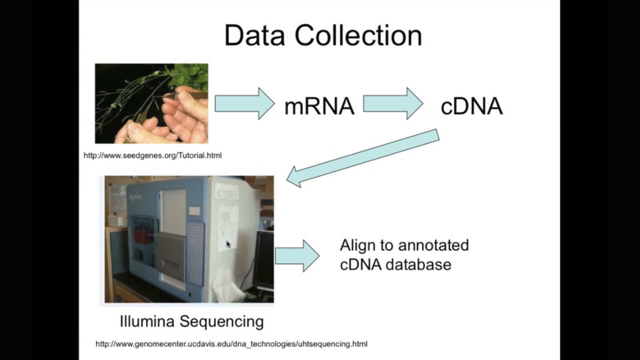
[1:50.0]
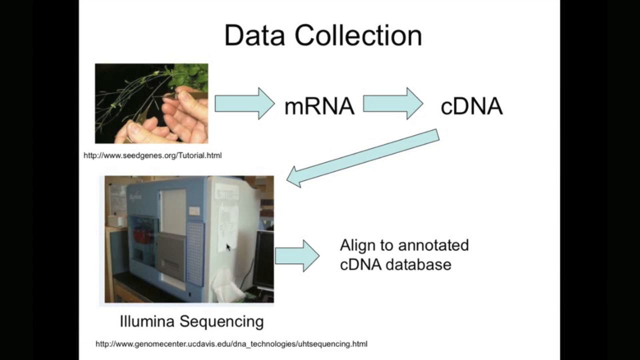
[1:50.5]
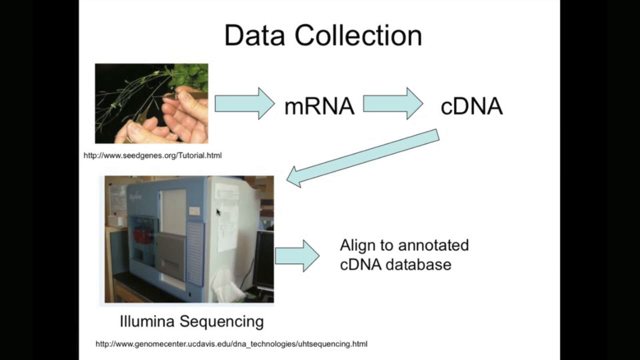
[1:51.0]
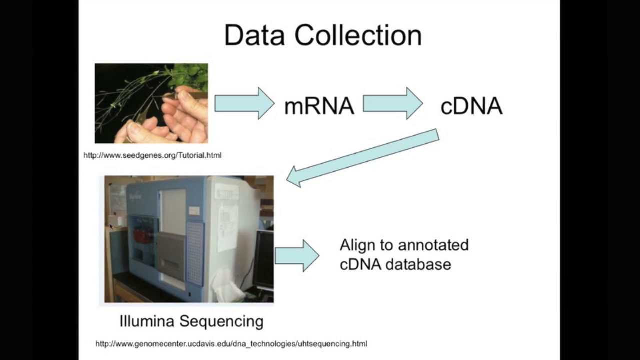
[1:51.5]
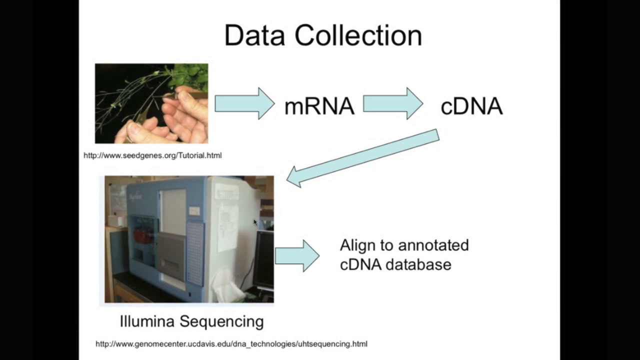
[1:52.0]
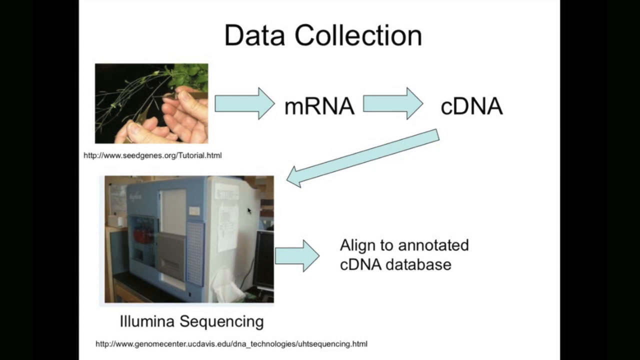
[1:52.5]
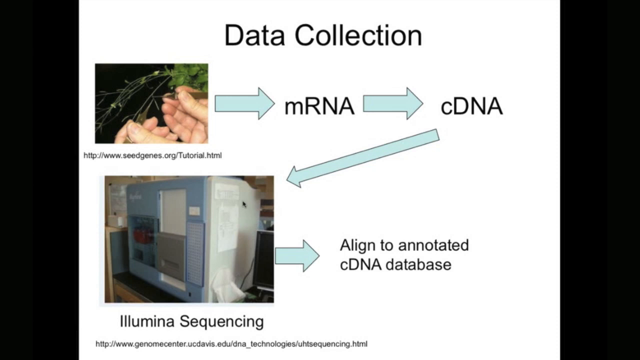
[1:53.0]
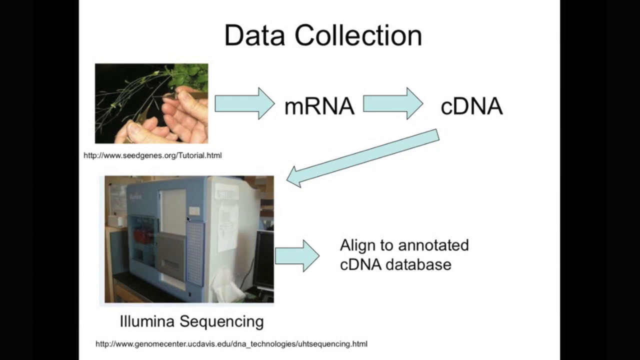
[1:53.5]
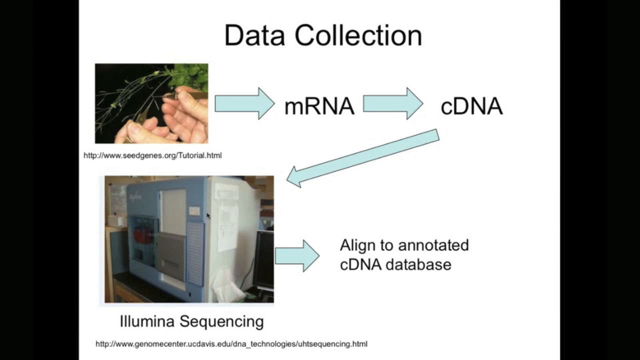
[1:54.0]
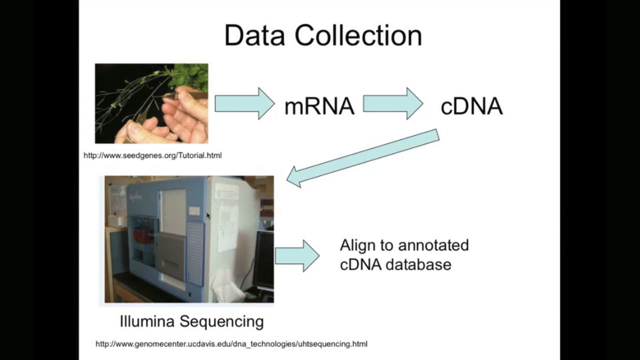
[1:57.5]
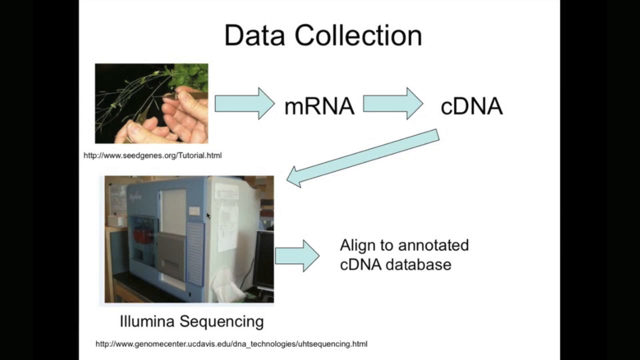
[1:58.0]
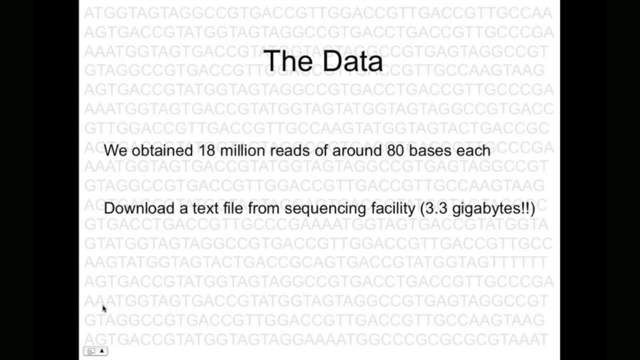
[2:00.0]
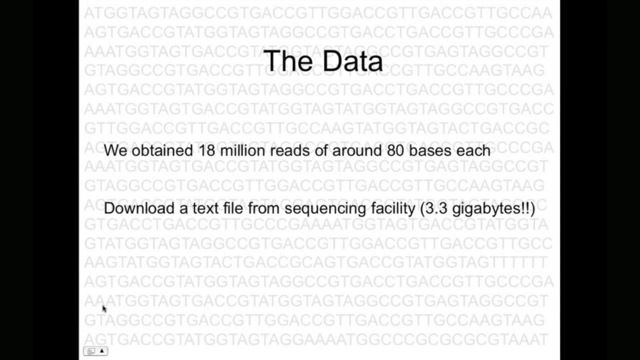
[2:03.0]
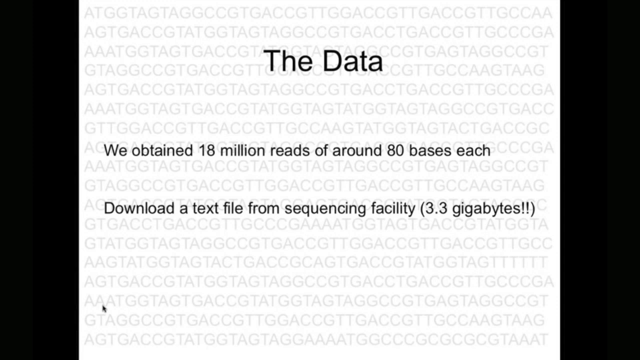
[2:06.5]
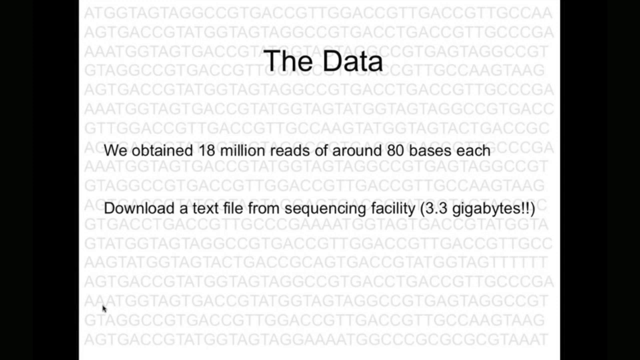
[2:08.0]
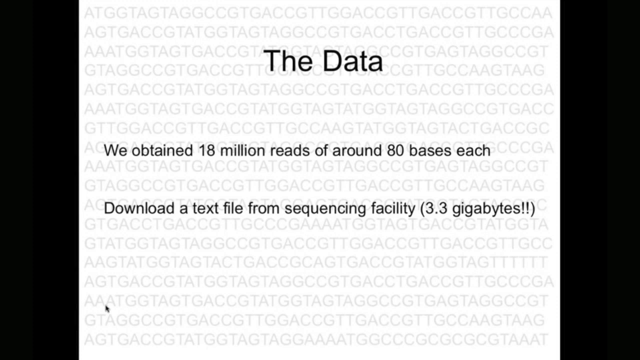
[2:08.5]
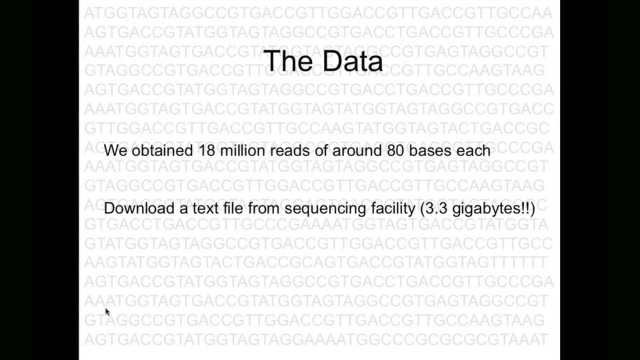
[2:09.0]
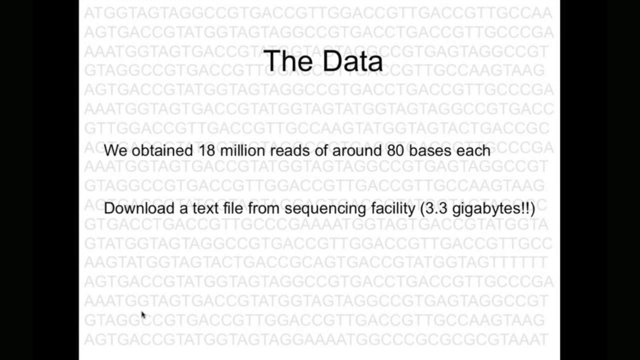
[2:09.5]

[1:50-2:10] The content refers to many annotated cDNAs, a downloaded text file totaling gigabytes, and a large database of genome sequence data.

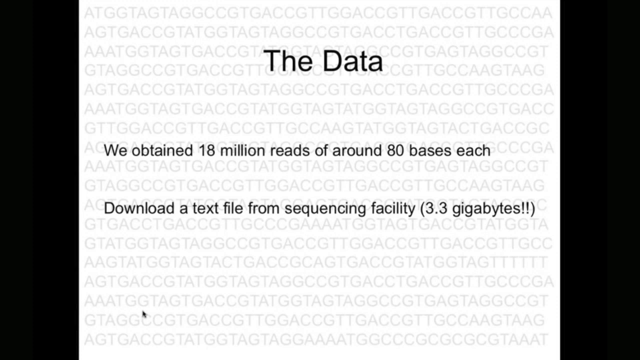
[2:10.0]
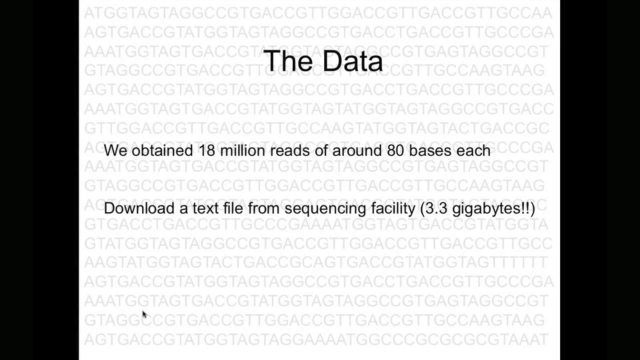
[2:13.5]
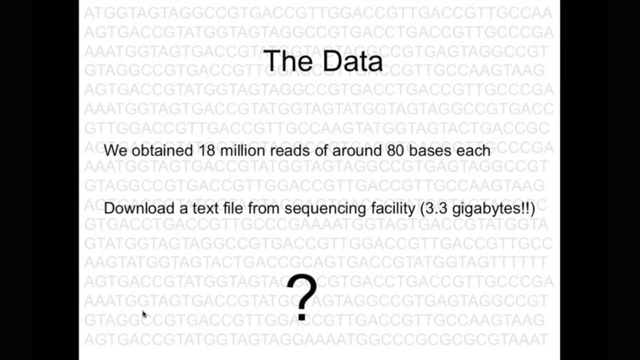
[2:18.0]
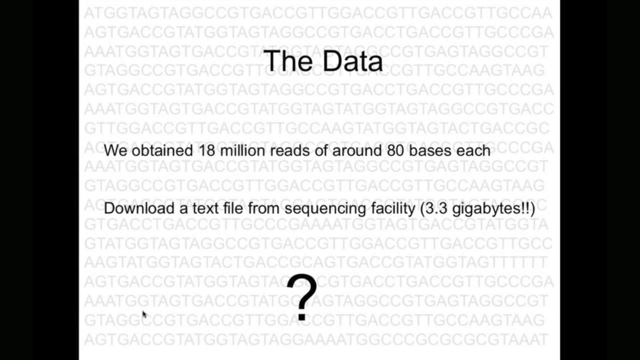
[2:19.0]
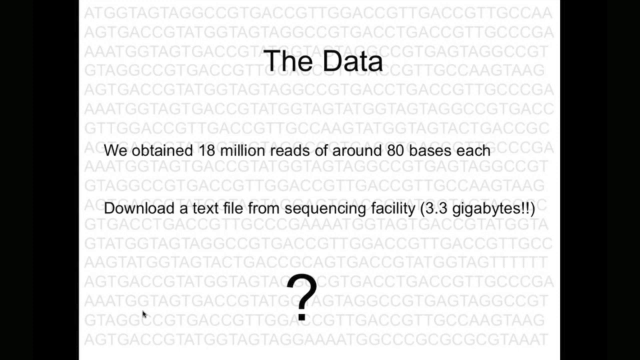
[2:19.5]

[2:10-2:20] The content concerns sequences being arranged in different ways over various periods of time, with DNA in the background.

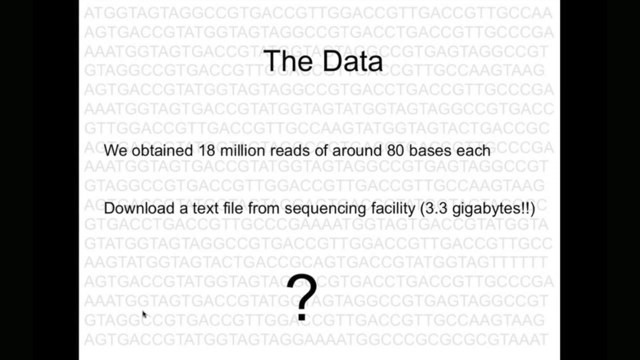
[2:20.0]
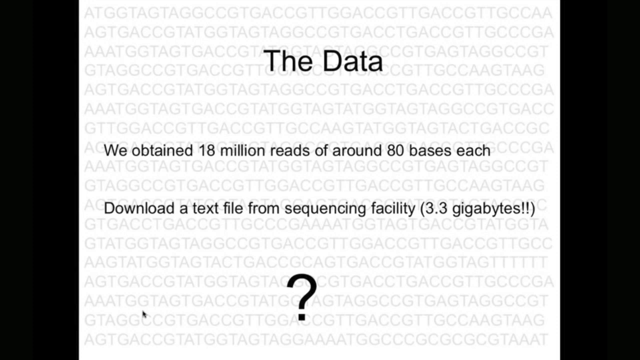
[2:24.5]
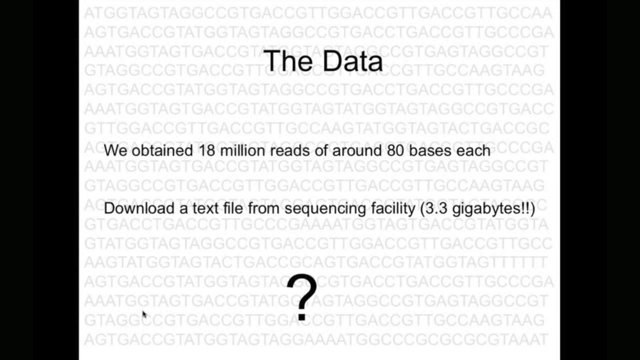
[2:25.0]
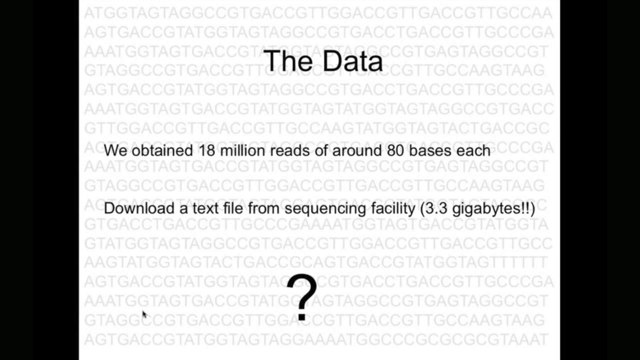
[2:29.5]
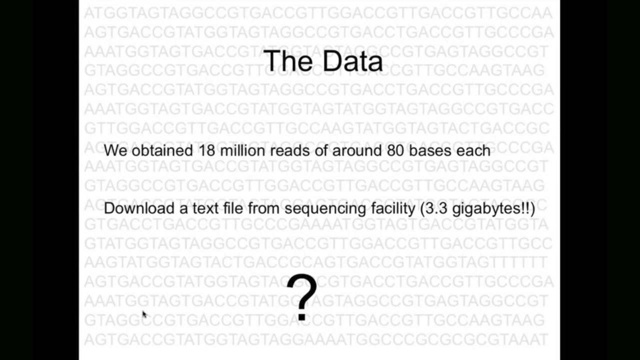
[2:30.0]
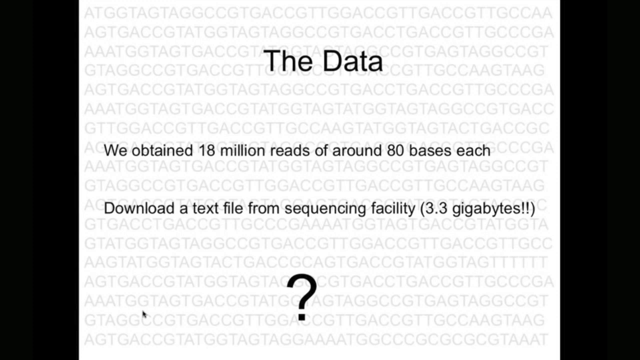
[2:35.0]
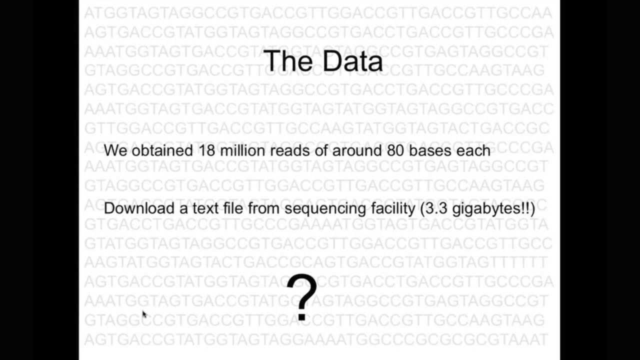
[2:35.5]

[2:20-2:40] The content refers to sequence data obtained in 2008, downloadable as text totaling 3.3 gigabytes, with data pieces put together into various genomic sequences.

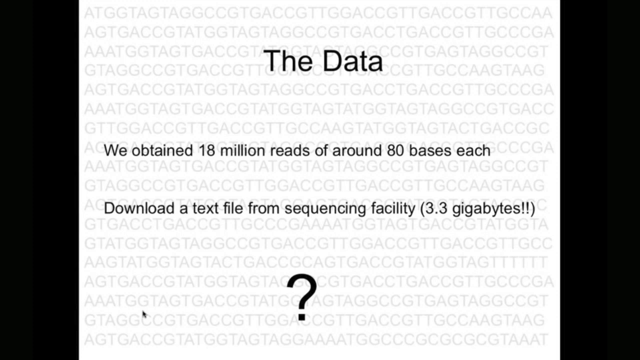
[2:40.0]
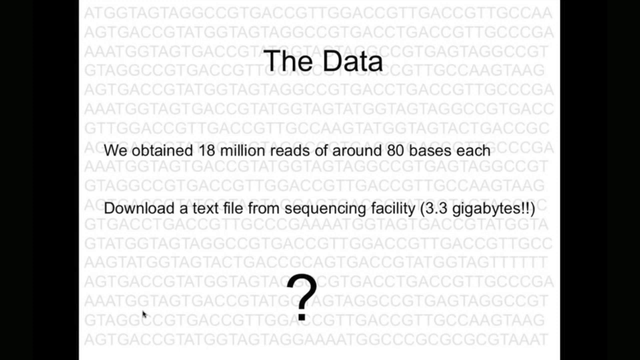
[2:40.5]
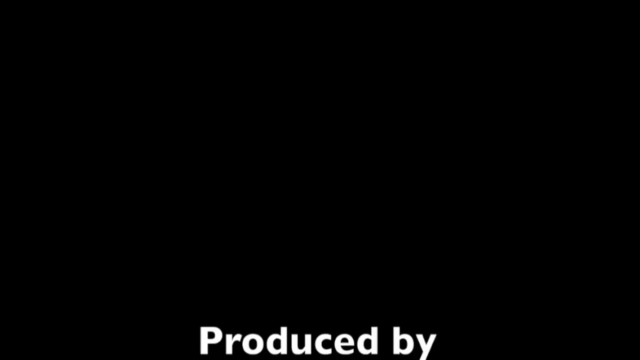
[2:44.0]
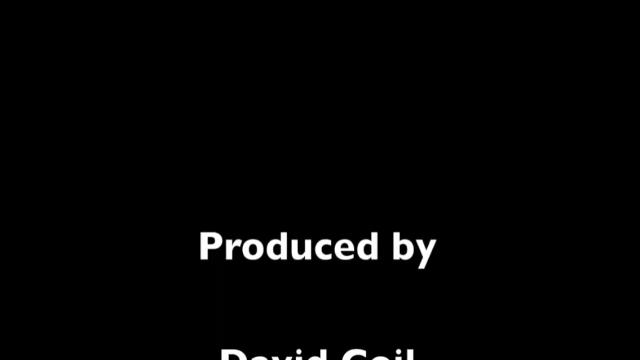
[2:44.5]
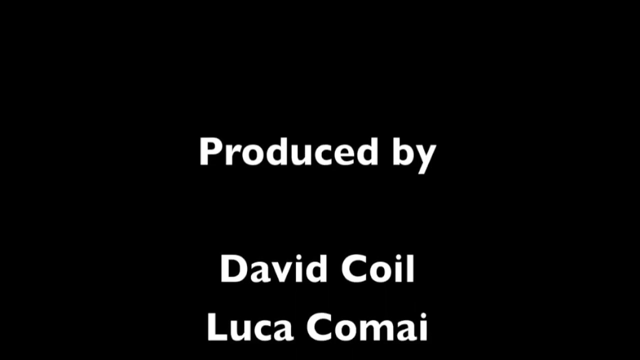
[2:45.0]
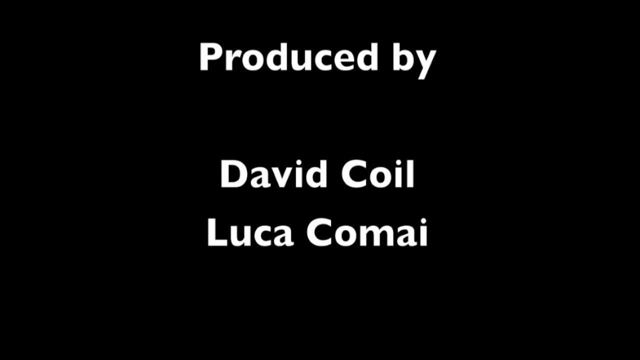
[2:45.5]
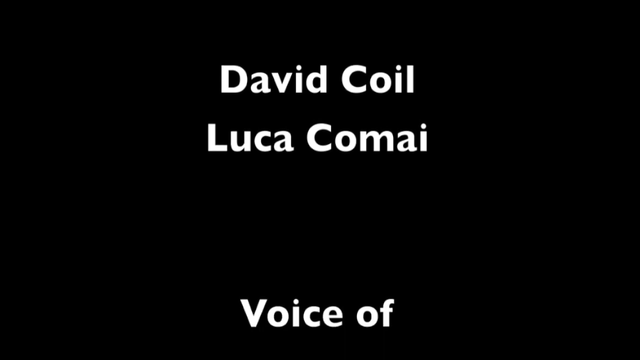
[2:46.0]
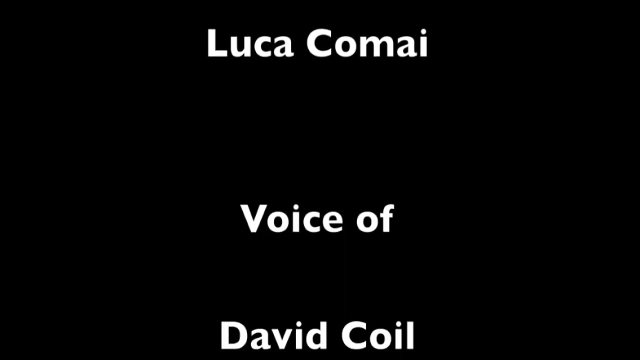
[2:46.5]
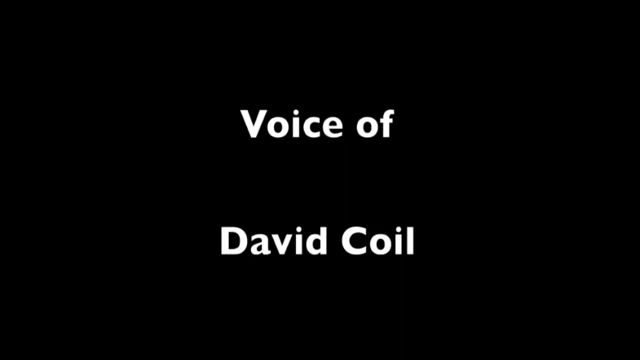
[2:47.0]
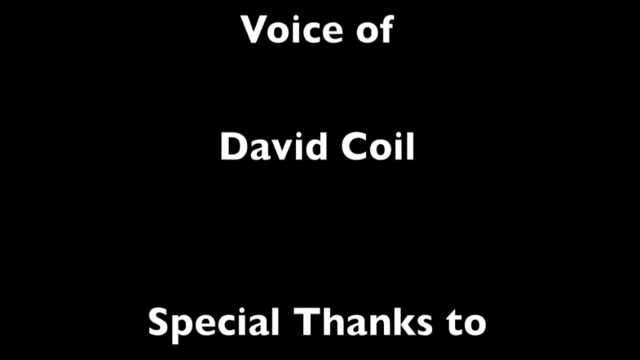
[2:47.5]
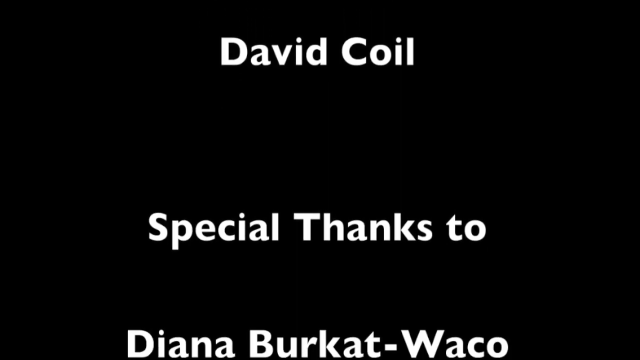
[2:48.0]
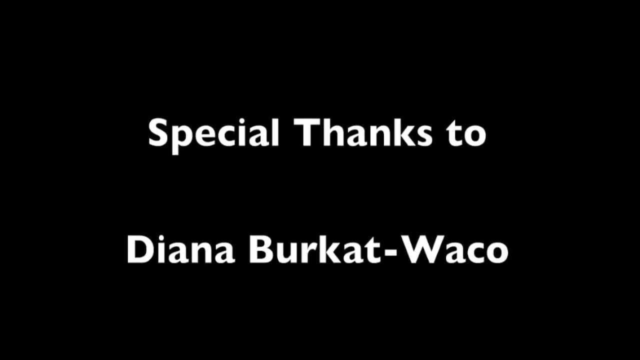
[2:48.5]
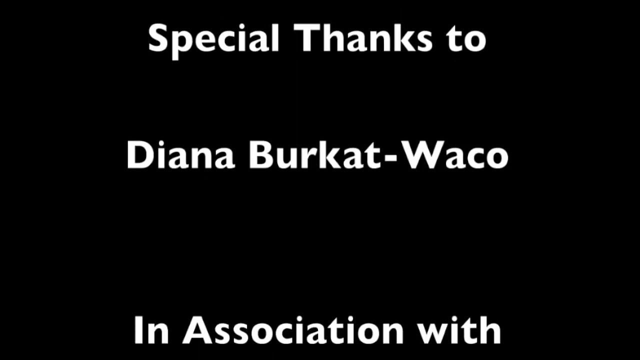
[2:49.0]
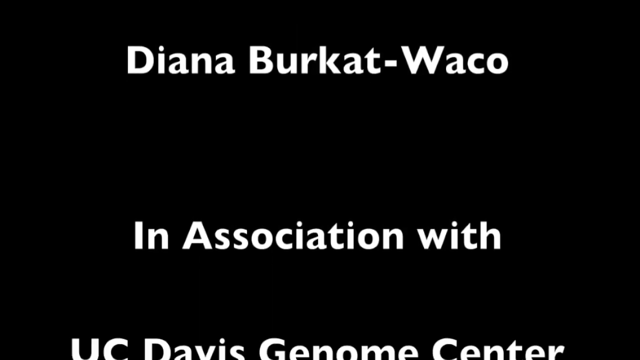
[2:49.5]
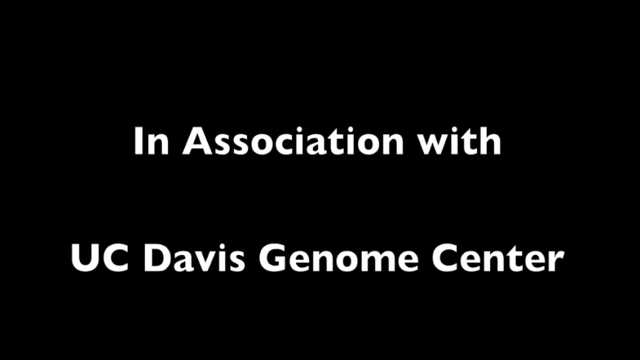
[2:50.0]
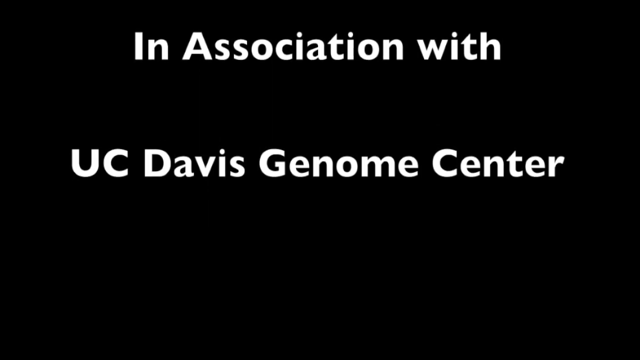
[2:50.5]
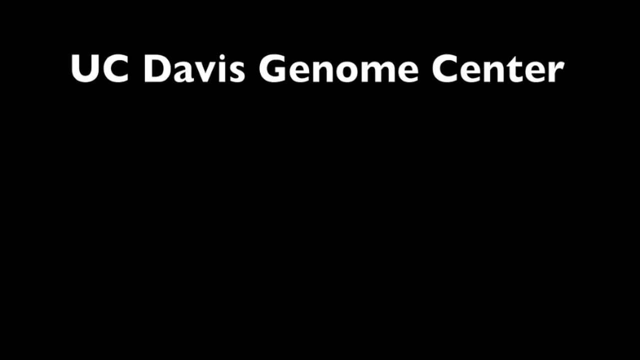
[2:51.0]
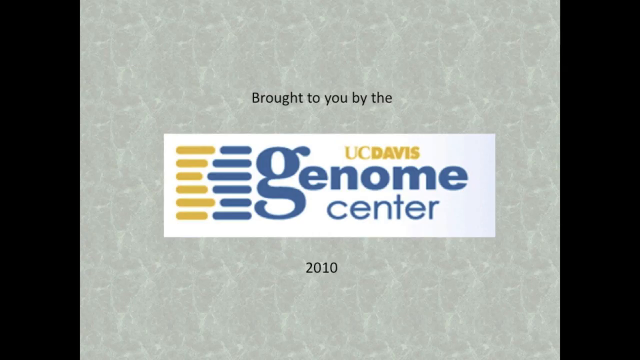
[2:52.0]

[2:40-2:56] There is a lot of contrast between the darkness in the background and the light. Text refers to a genome center and the year 2010.